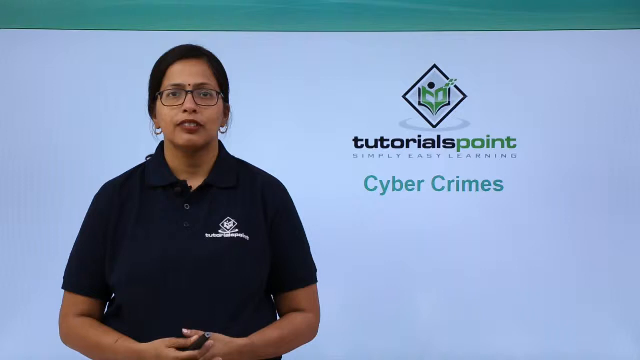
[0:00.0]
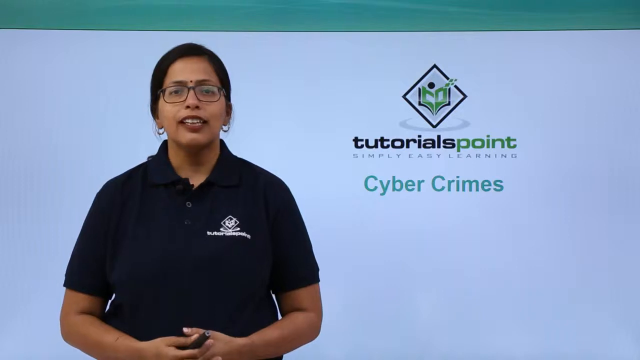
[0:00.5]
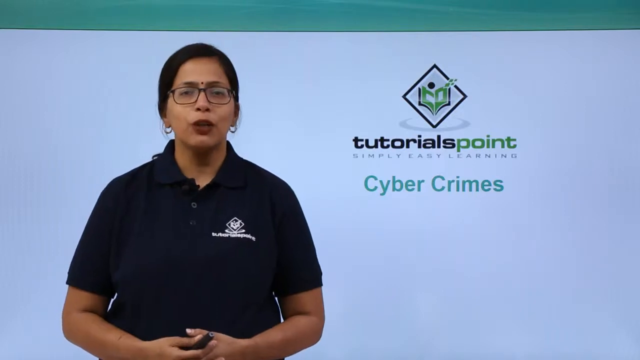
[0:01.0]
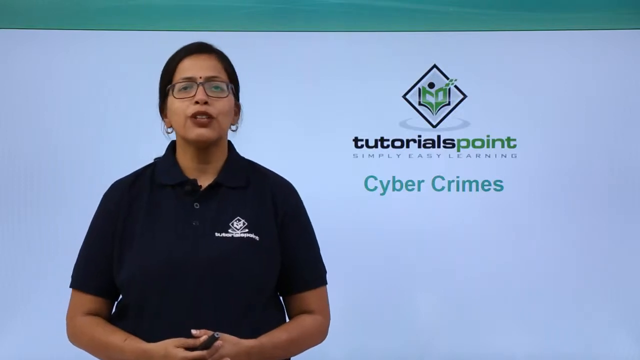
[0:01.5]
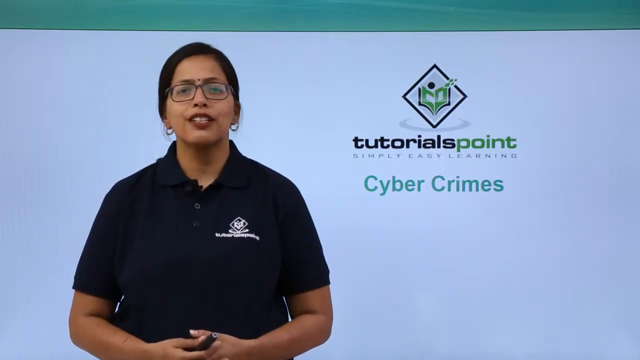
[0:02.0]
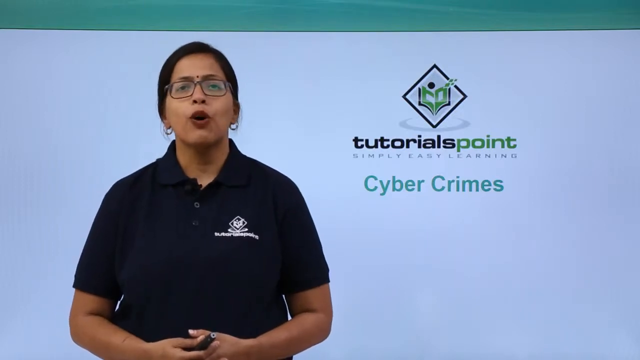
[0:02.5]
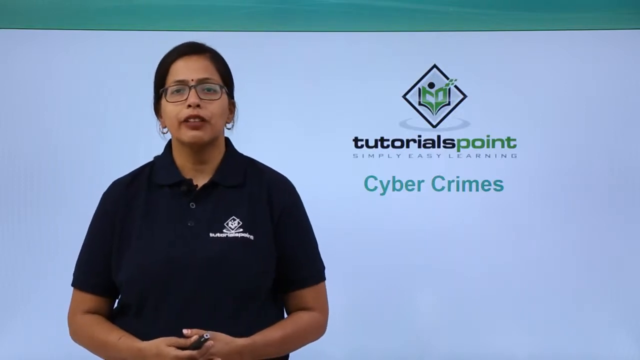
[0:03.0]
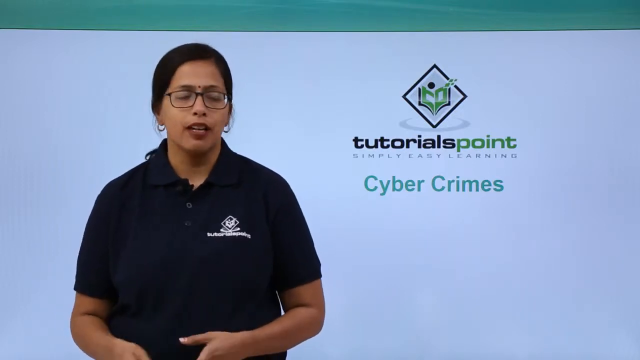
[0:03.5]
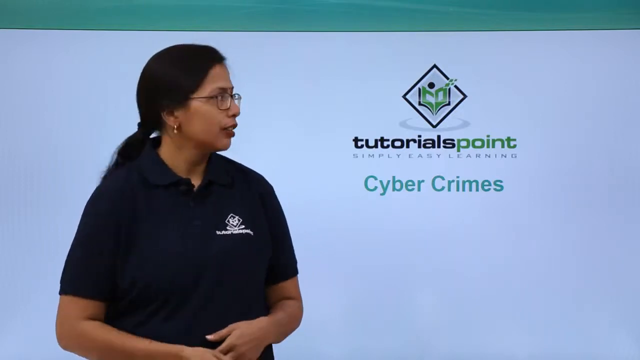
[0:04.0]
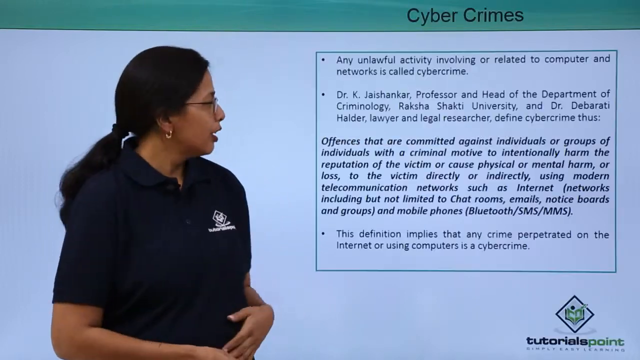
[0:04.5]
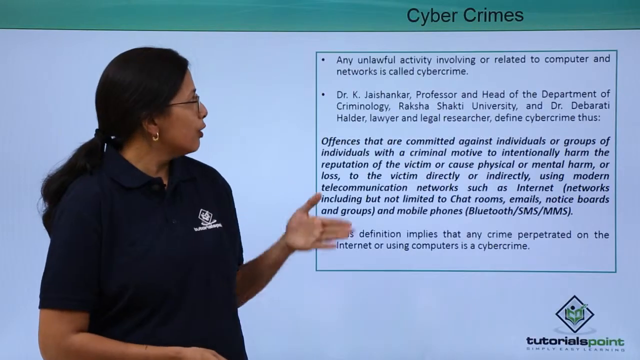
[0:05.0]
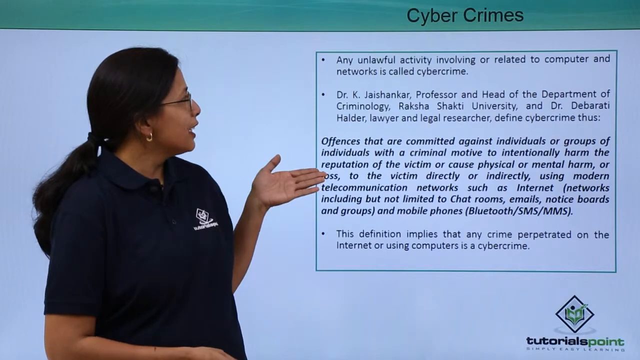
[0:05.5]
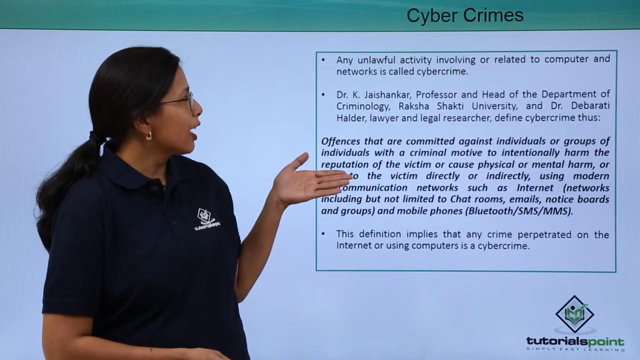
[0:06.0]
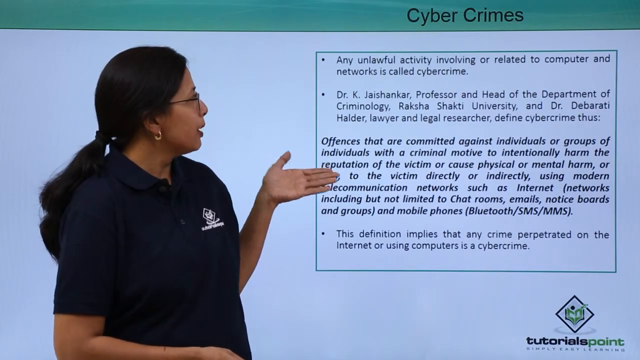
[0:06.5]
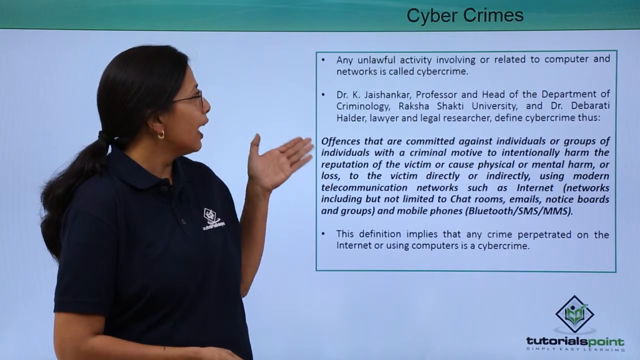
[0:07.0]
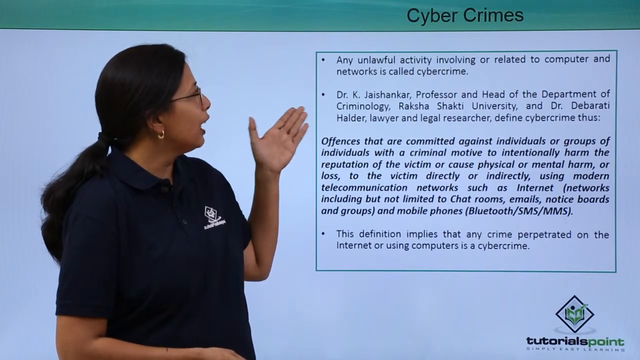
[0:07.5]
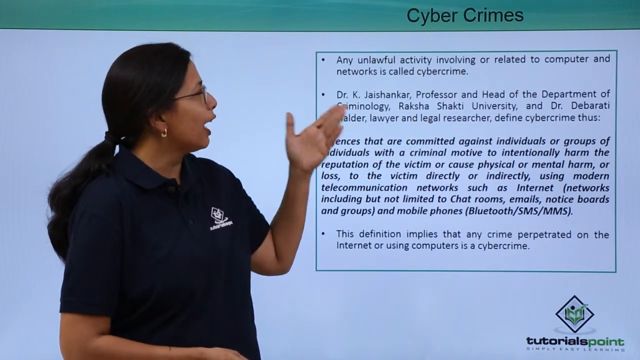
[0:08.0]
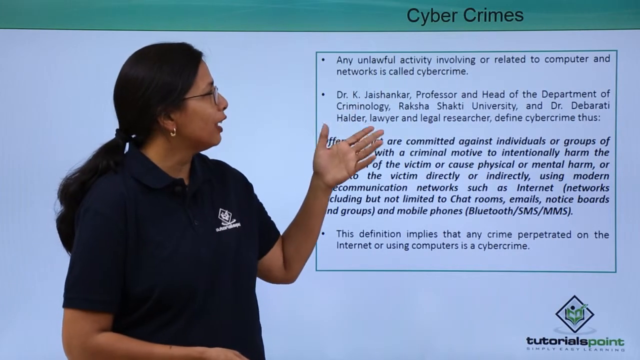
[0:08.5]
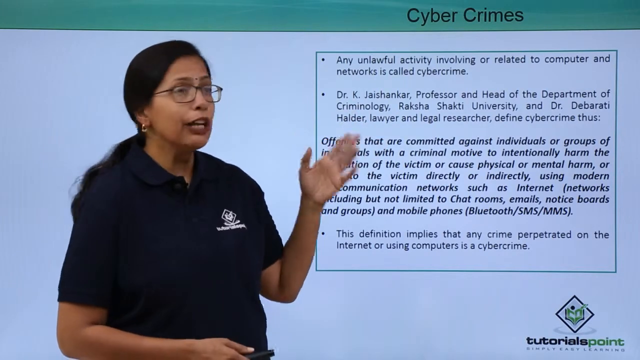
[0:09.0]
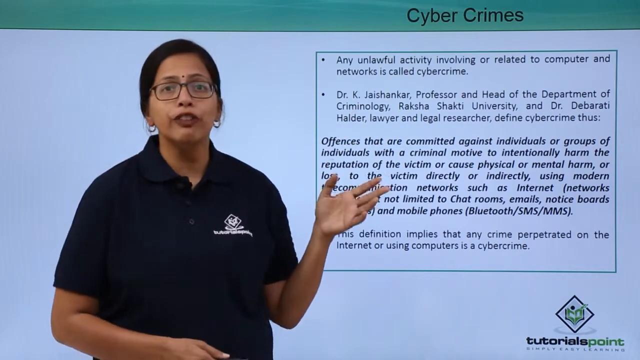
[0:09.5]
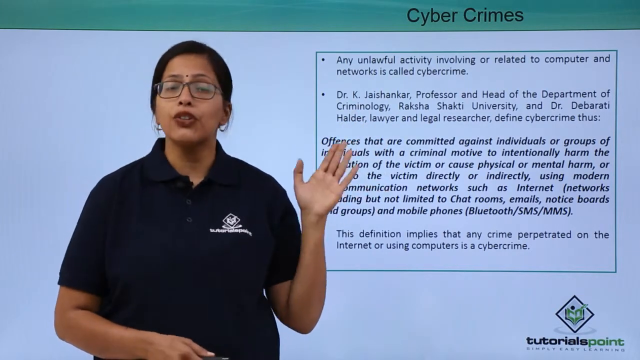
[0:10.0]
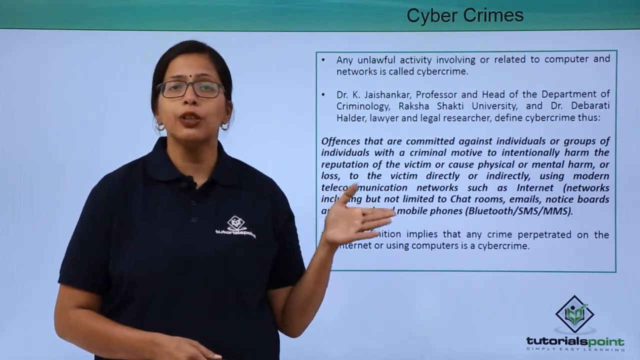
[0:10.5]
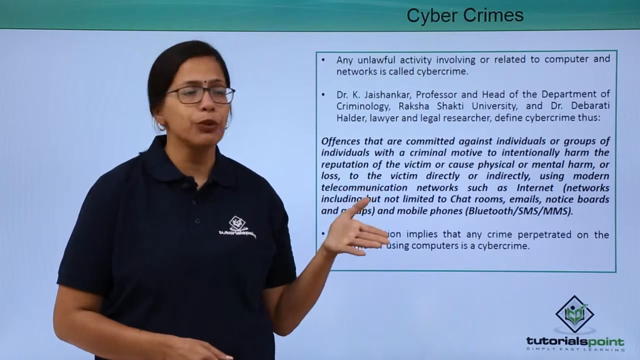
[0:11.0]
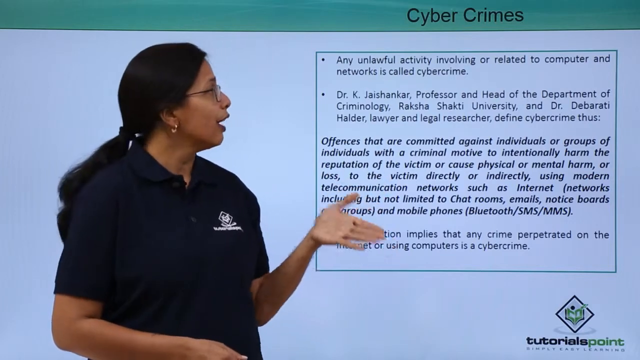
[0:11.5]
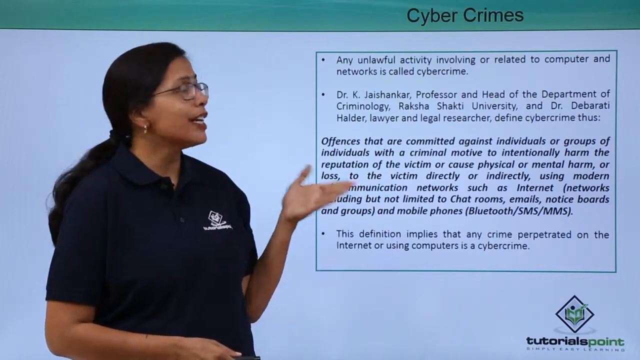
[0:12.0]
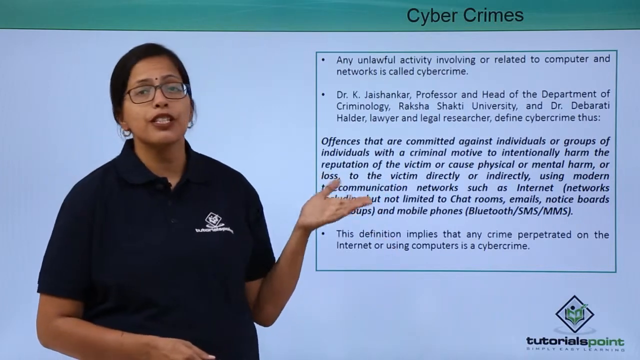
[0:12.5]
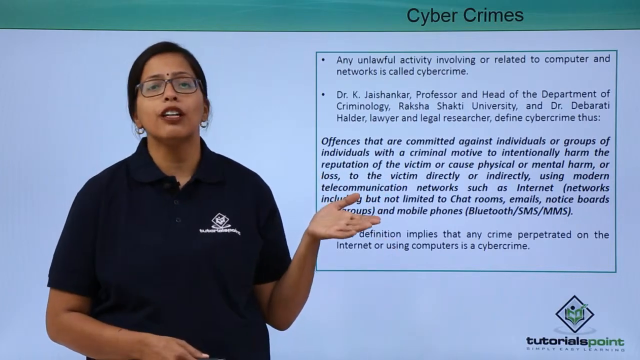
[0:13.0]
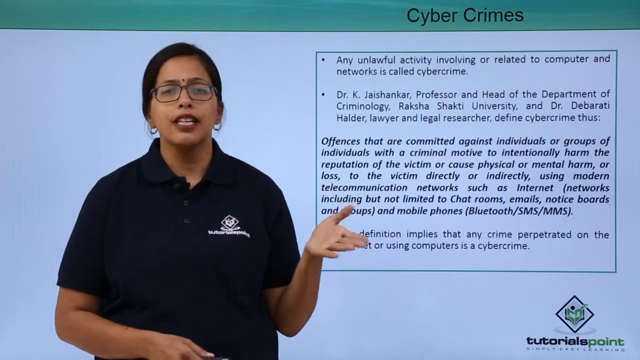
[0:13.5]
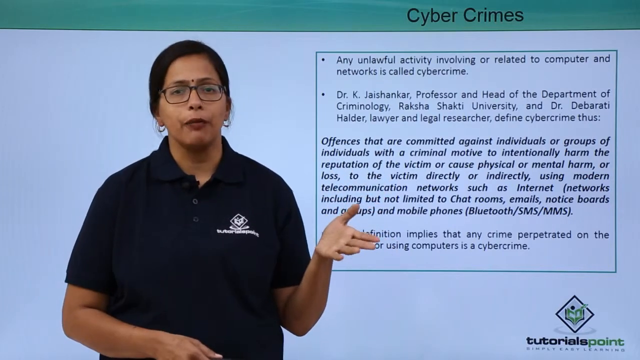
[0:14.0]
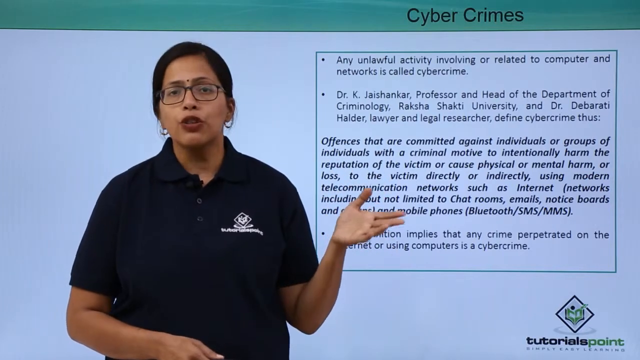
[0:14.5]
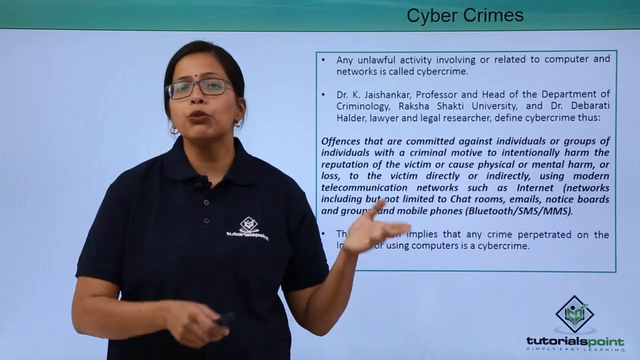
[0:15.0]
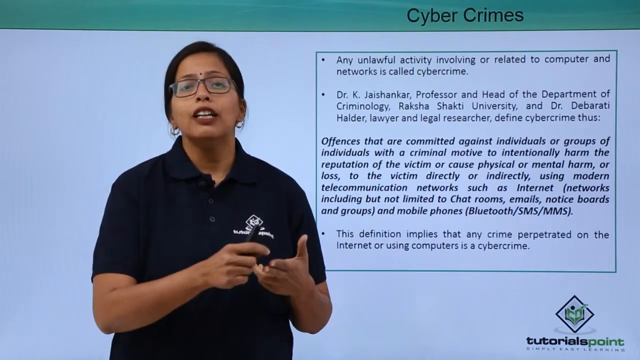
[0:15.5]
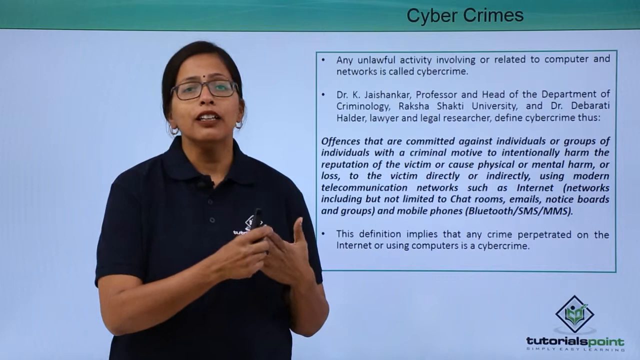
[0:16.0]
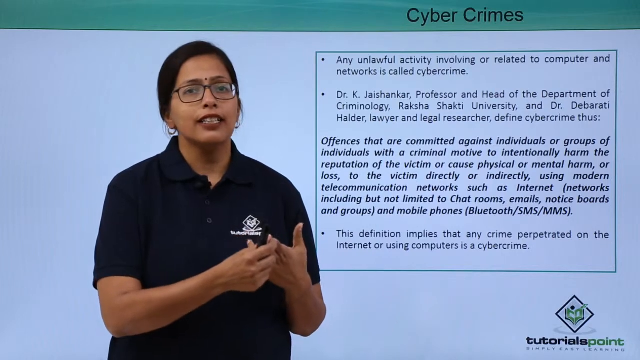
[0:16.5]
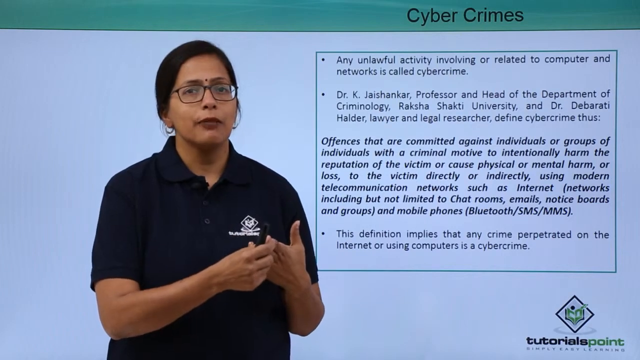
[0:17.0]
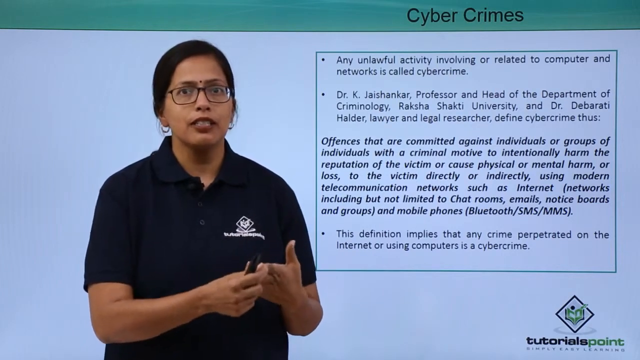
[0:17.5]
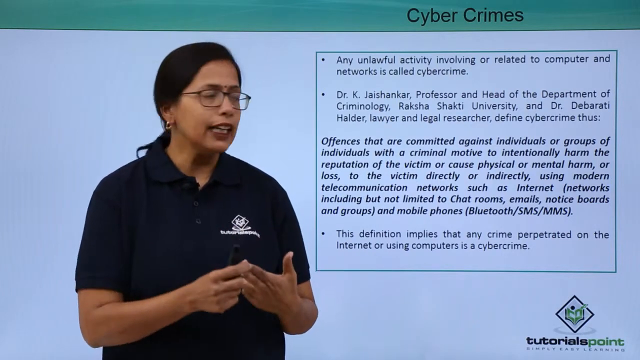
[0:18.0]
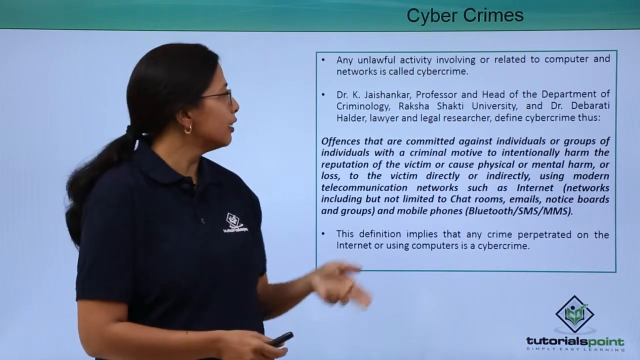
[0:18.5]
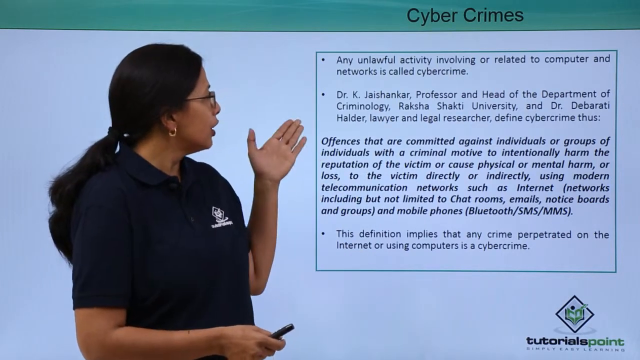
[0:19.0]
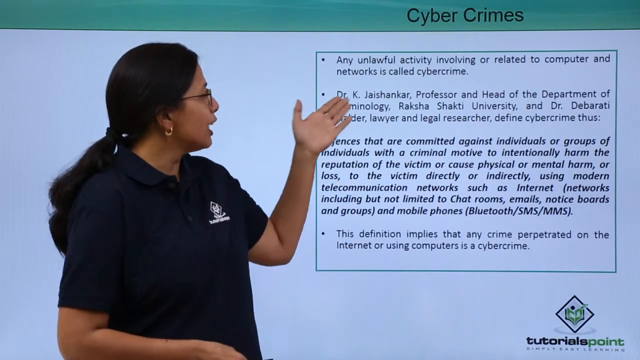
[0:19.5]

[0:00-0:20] A woman stands in front of a whiteboard. She is an Indian lady who looks middle-aged. She wears a black t-shirt with two buttons and a logo on the side, the logo of tutorial points with "Simply Easy Learning" and its logo sign. A microphone is attached to the collar of her shirt. She wears small hoop earrings, red to maroon lip gloss and glasses, has a black dot in the middle of her eyebrows, and has black hair. She holds a pen in her hand and gives a presentation on cybercrimes, quoting a definition of cybercrimes from Dr. K. J. Shankla, Professor and Head of Department of Criminology, Rajka Shakti University, and Dr. Dabarati Haider, Lawyer and Legal Researcher.